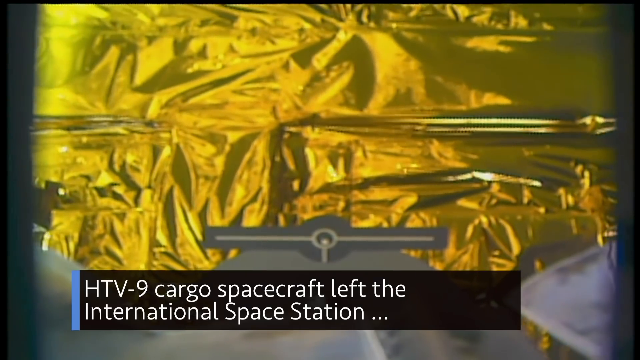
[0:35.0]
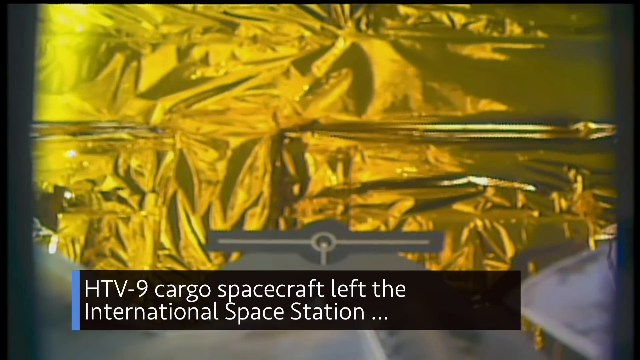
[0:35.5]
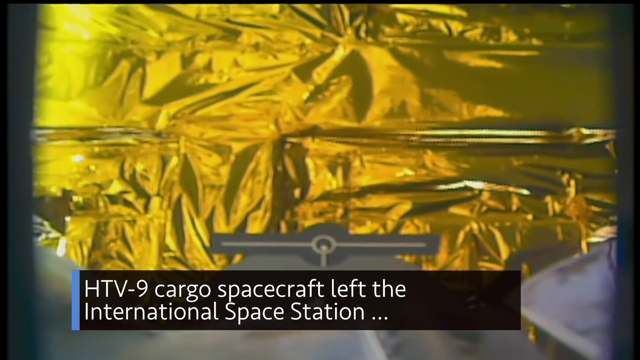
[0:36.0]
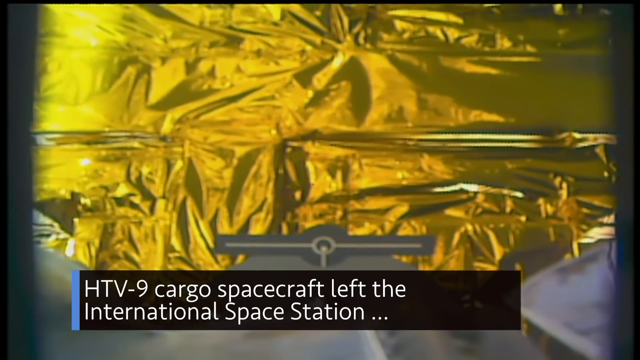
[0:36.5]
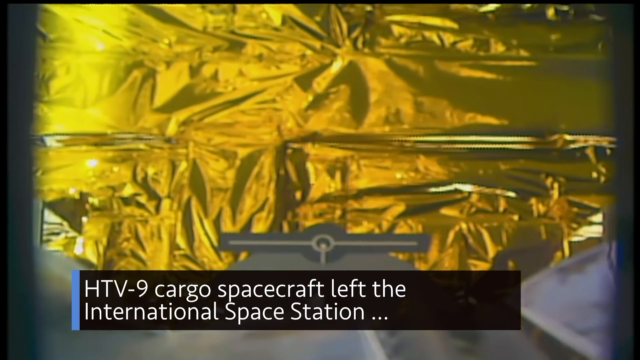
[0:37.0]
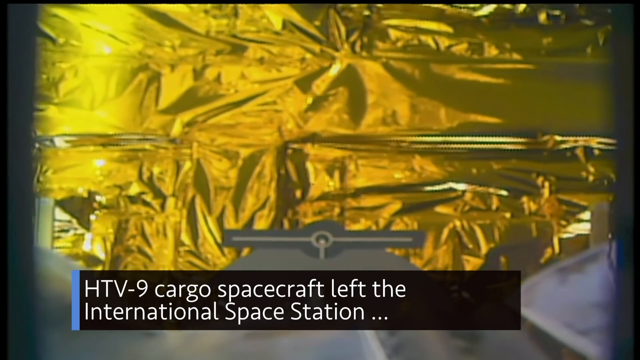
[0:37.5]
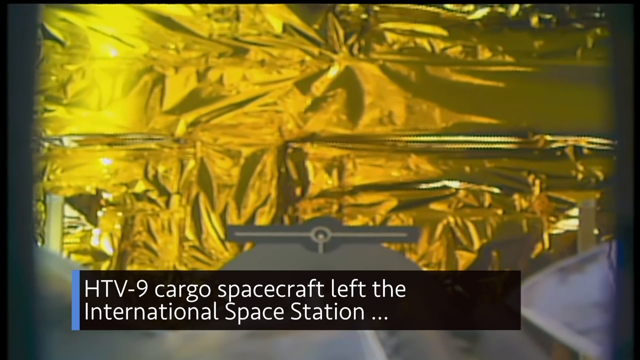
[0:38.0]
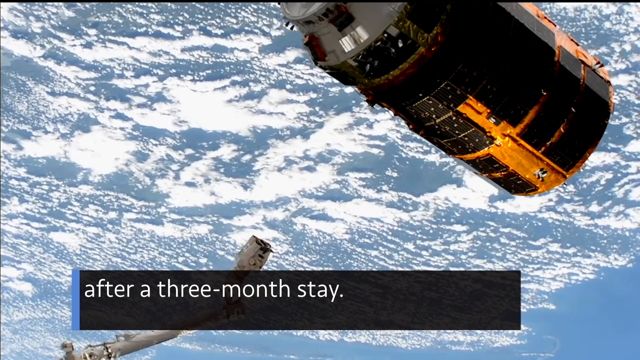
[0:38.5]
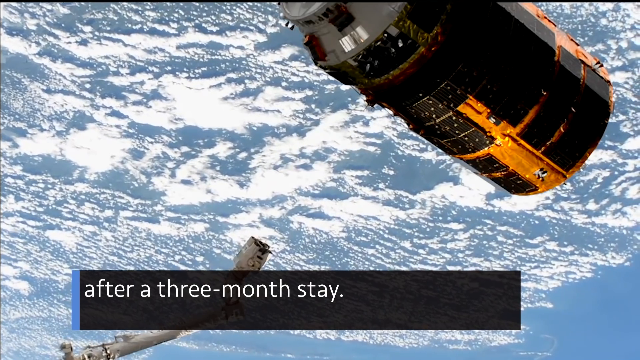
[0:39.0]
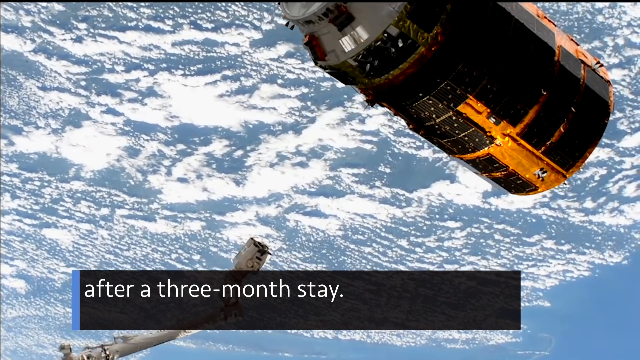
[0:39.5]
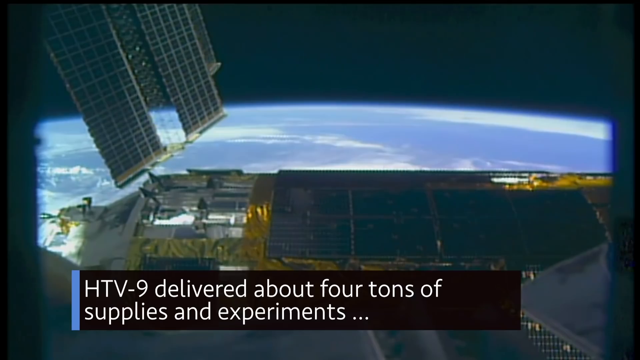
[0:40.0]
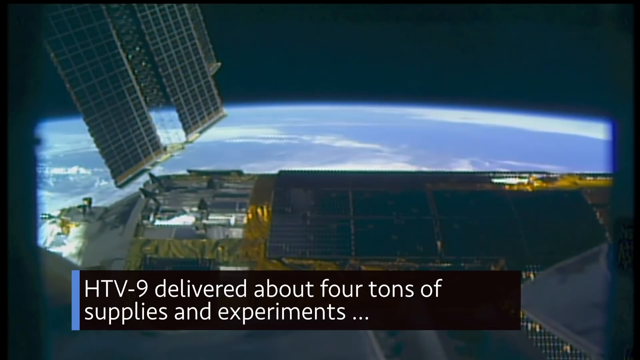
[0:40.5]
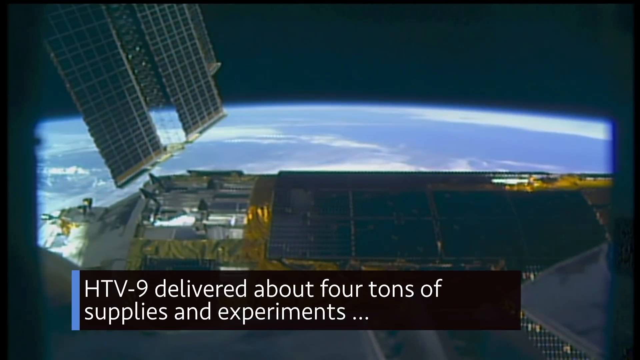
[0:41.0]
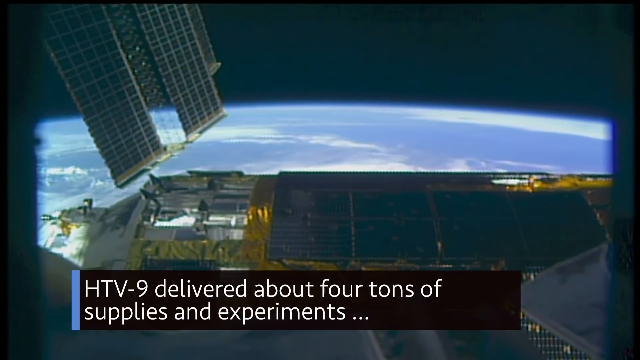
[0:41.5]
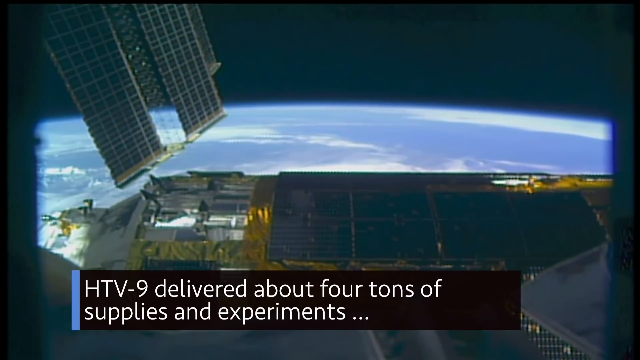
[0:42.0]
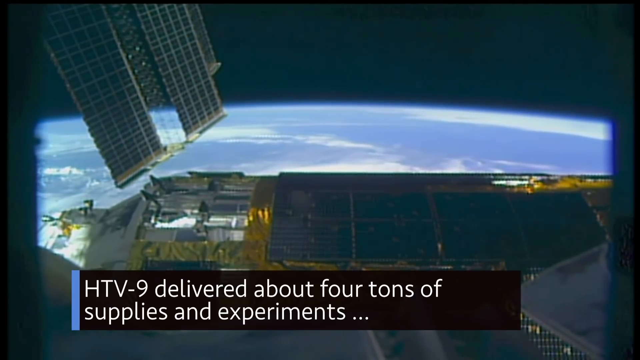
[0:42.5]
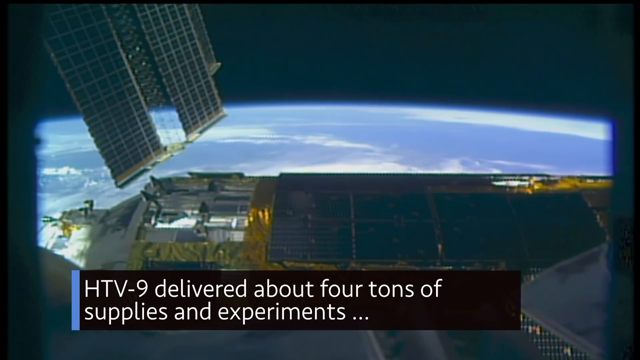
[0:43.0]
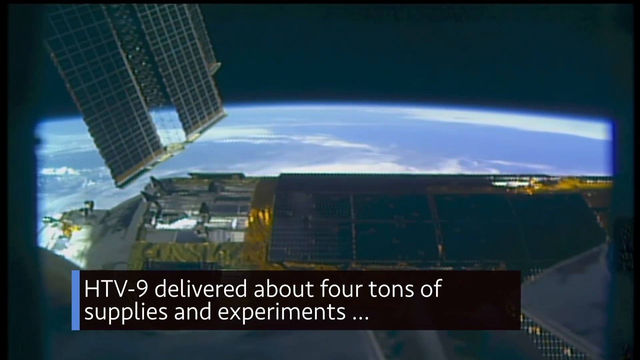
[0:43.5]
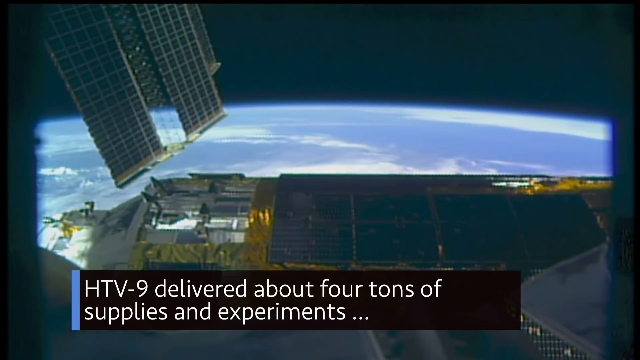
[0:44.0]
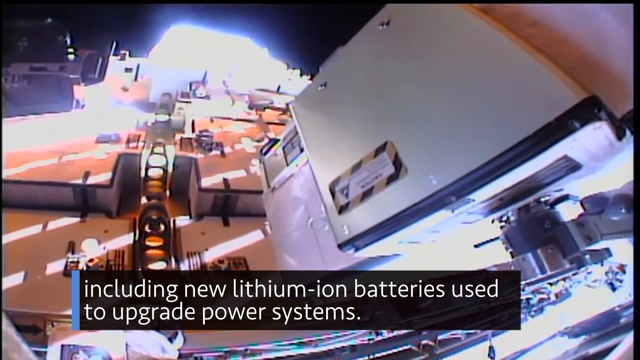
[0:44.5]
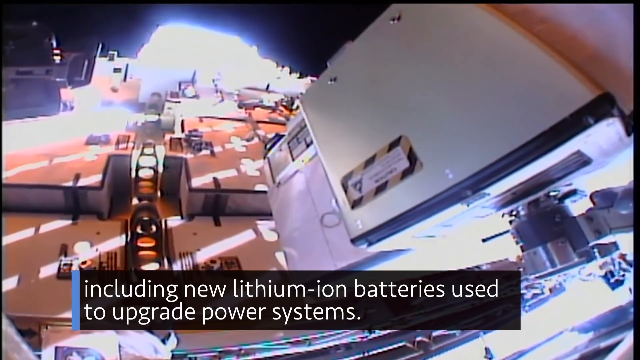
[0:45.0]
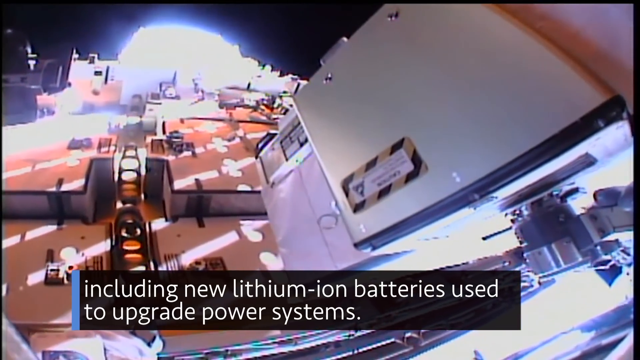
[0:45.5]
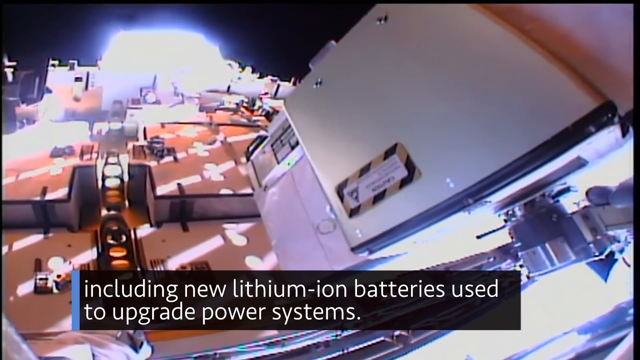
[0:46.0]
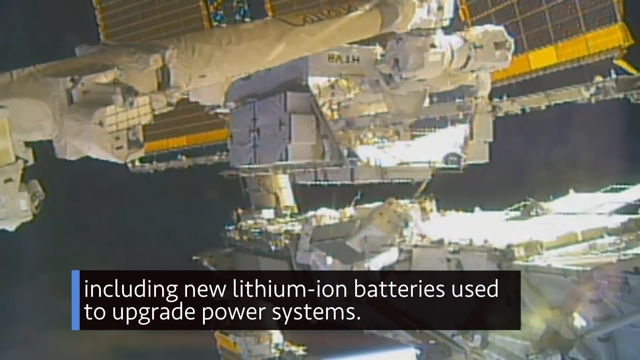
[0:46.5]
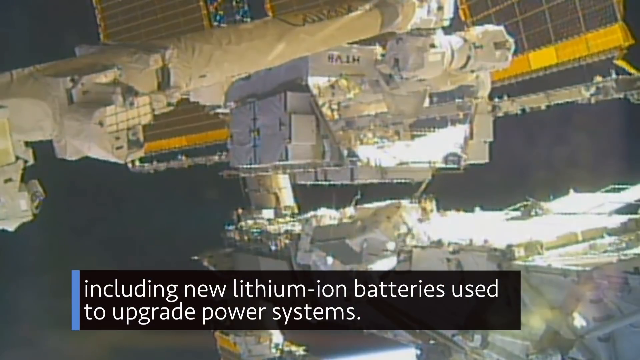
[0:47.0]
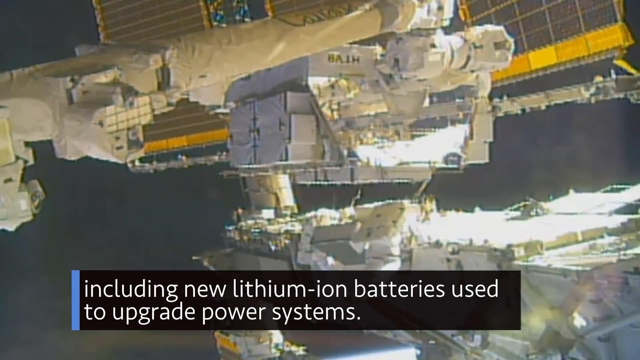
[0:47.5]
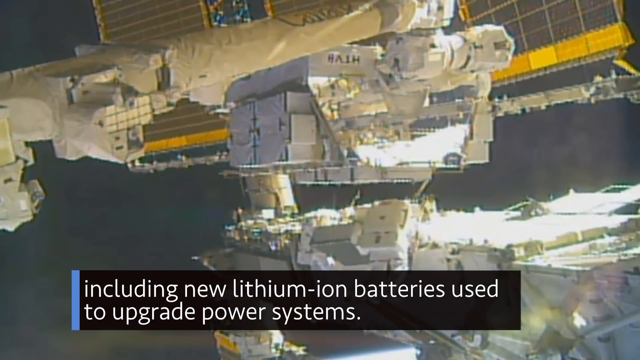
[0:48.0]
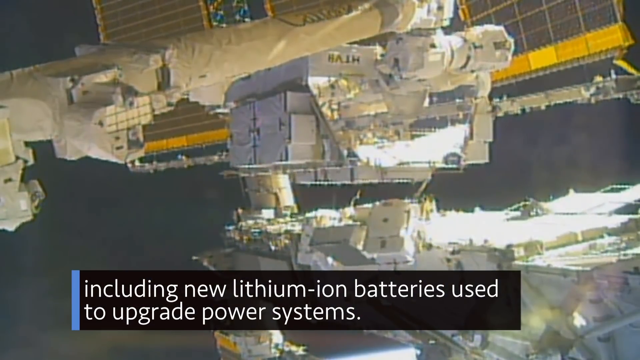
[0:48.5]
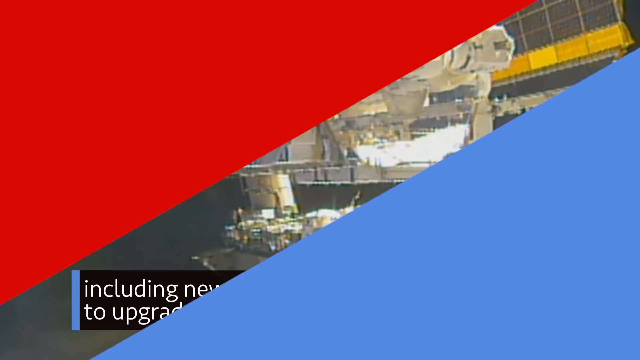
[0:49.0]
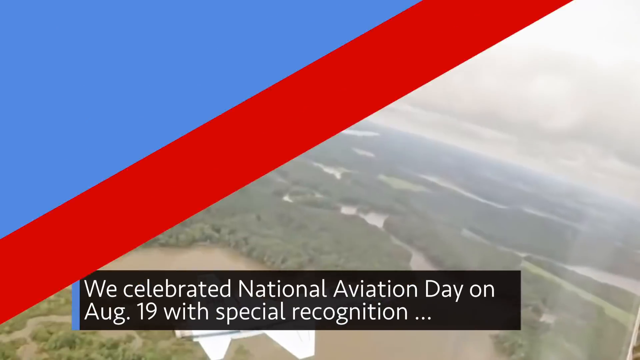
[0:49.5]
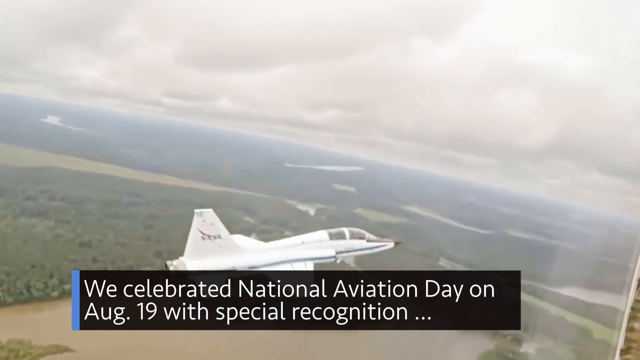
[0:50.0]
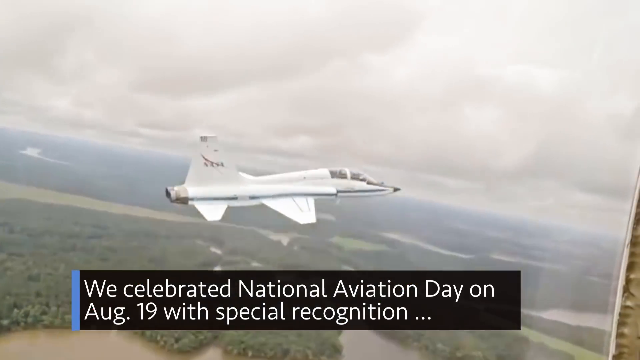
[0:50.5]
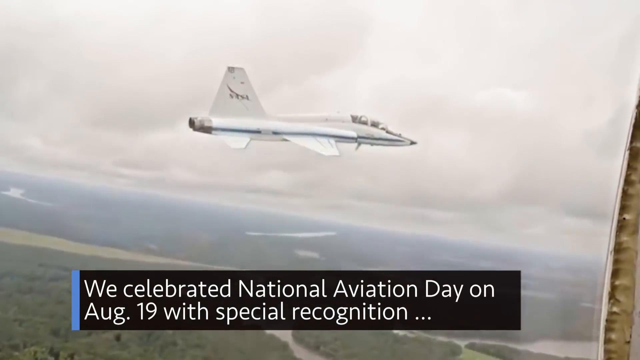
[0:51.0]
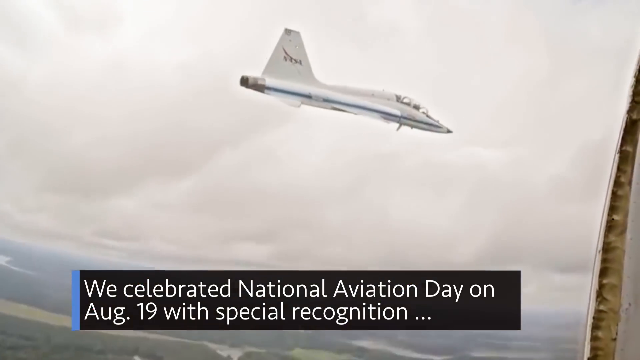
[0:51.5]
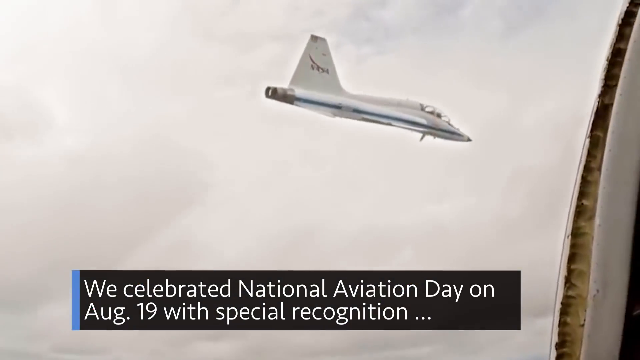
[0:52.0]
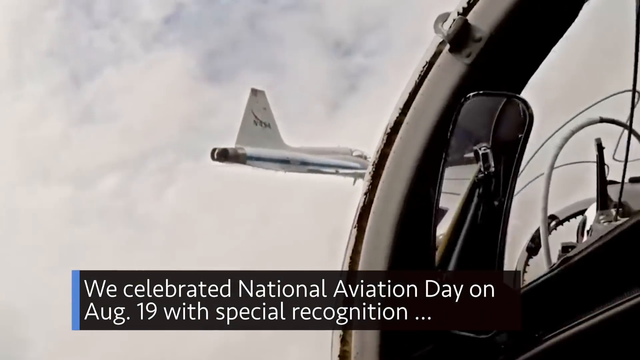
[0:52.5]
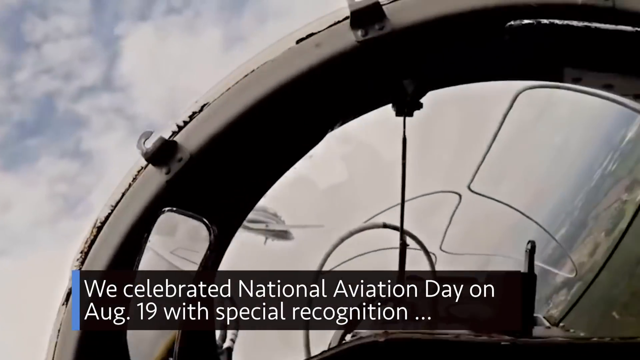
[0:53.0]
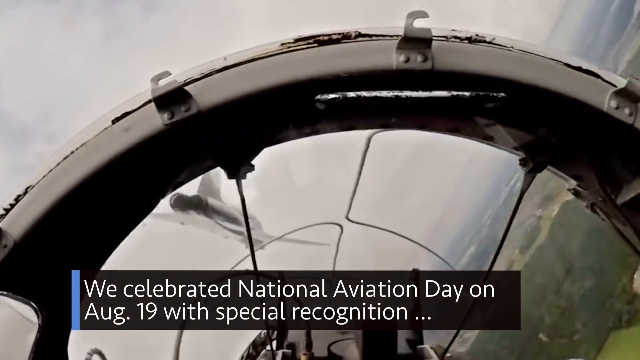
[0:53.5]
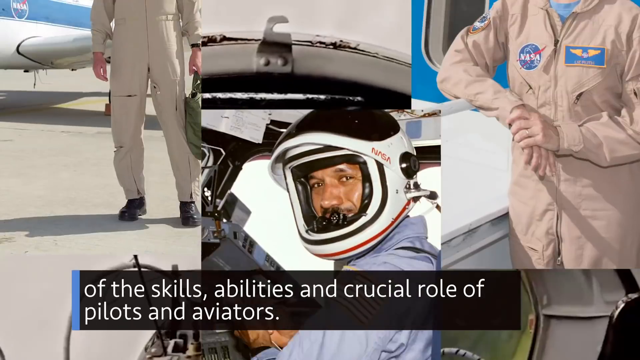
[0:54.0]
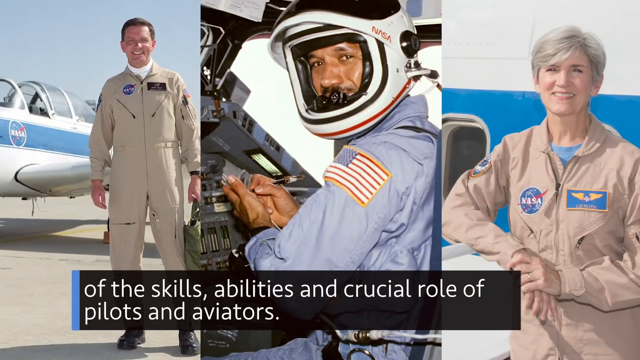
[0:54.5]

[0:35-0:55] The gold foil is shown with a little gray crosshair at the bottom as the camera zooms out, and the banner at the bottom reads "HTV-9 cargo spacecraft left the International Space Station." The scene changes to the International Space Station, a black and orange building in space, with Earth below it showing clouds and blue sky, and the banner "after a three-month stay." Another view of the International Space Station shows some of the solar paneling, with the bottom banner "HTV-9 delivered about four tons of supplies and experiments." Then a view inside the space station appears to show a robot moving around and placing things on the ship, with the banner "including new lithium-ion batteries used to upgrade power systems," which is presumably what the little robot is putting together. The scene shifts to Earth, where a white plane is flying, with the banner "we celebrated National Aviation Day on August 19th with special recognition of the." Briefly, three NASA astronauts or pilots, two men and one woman, appear on the screen.